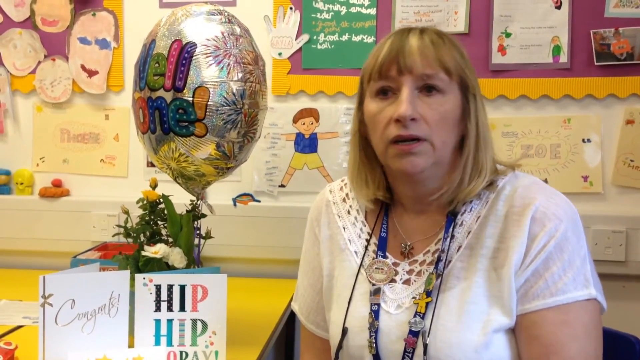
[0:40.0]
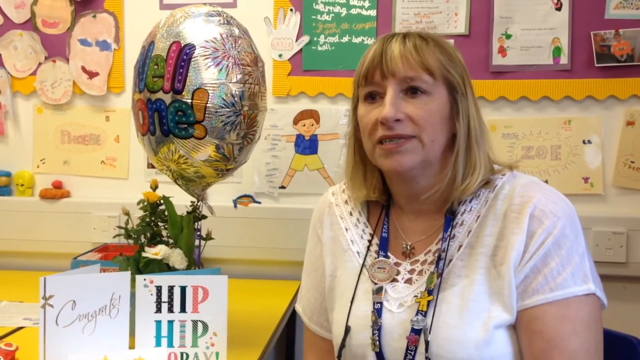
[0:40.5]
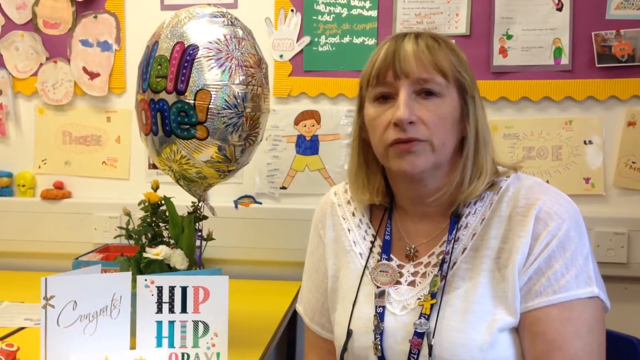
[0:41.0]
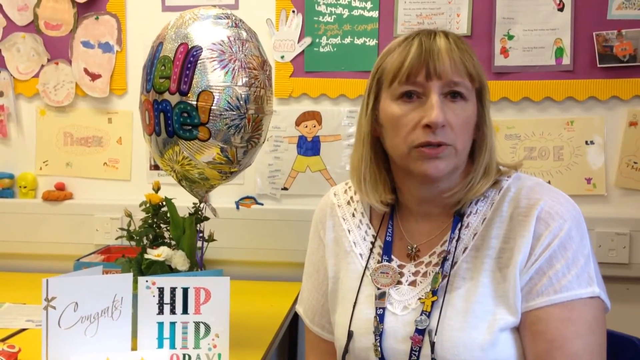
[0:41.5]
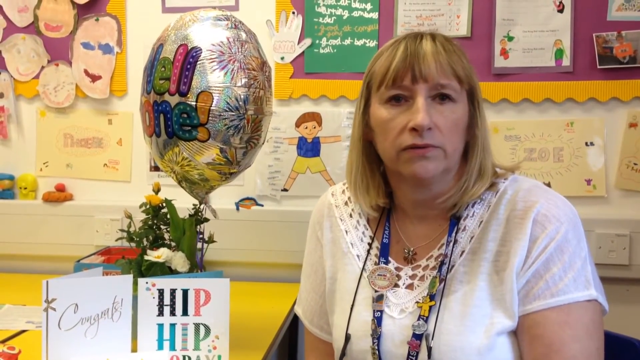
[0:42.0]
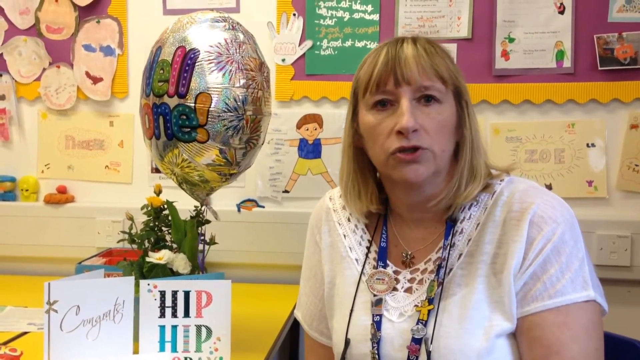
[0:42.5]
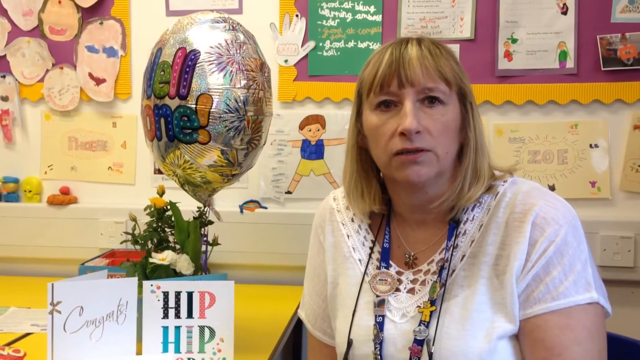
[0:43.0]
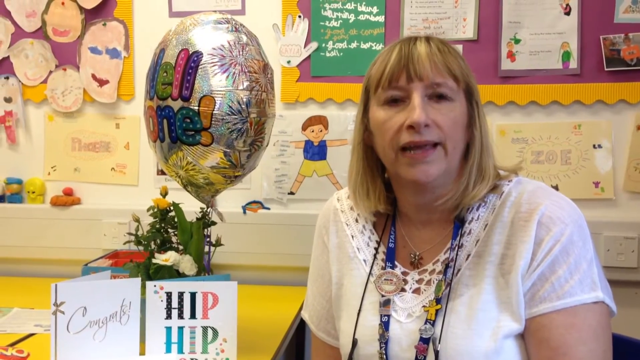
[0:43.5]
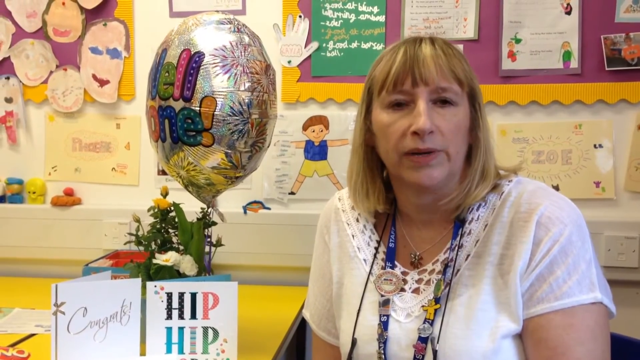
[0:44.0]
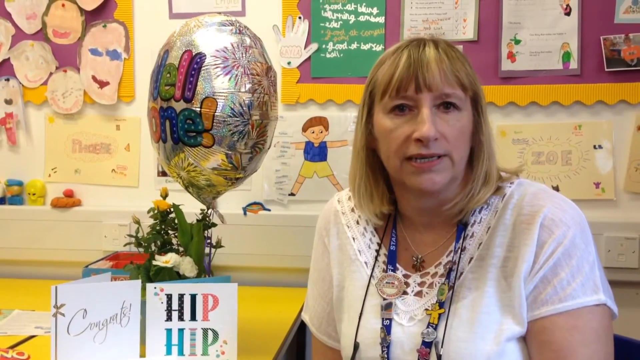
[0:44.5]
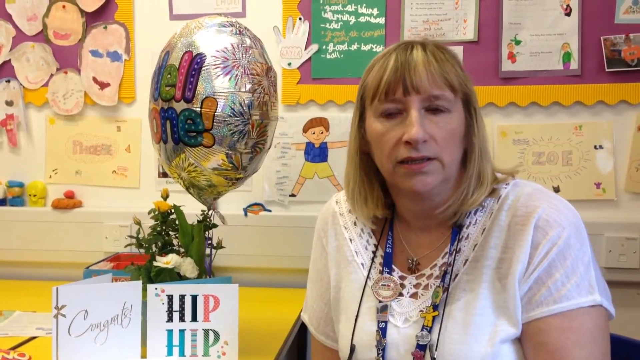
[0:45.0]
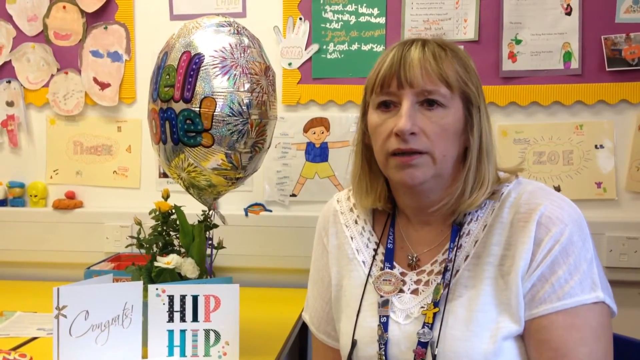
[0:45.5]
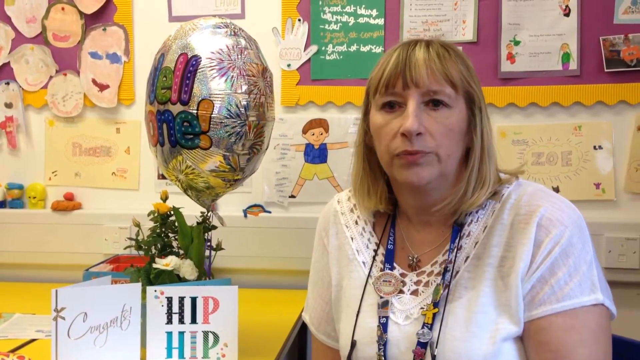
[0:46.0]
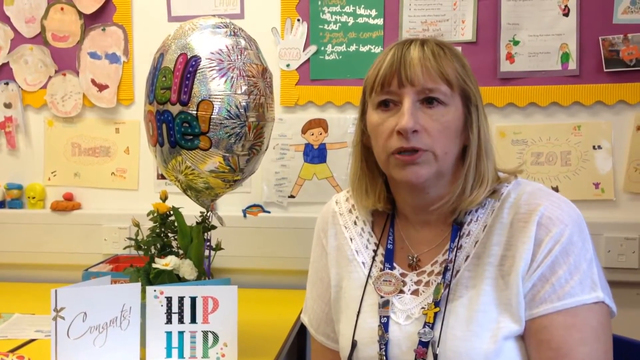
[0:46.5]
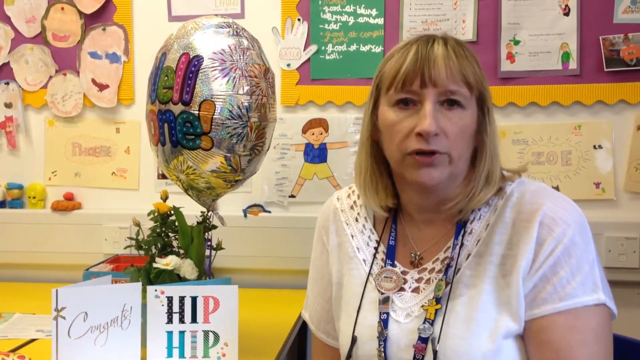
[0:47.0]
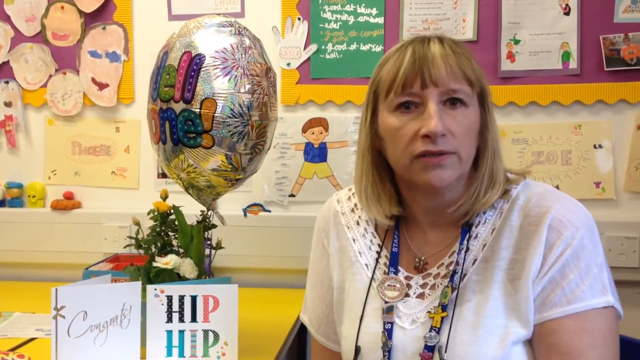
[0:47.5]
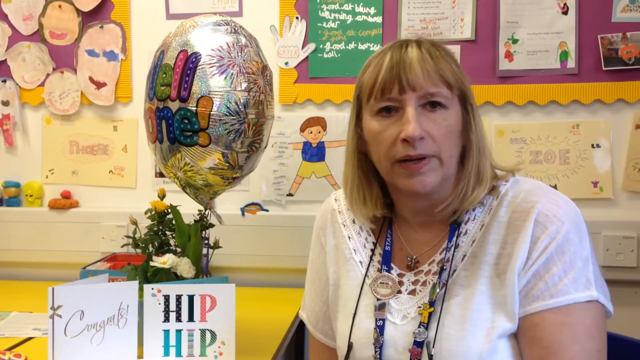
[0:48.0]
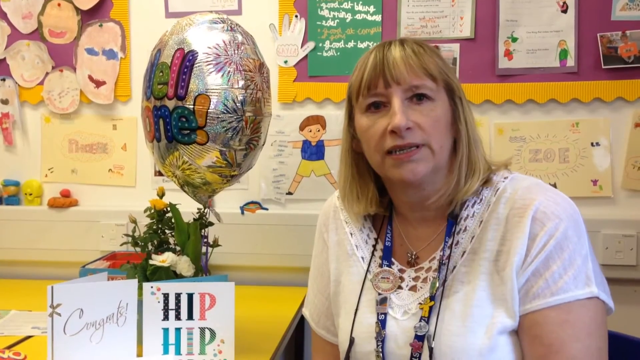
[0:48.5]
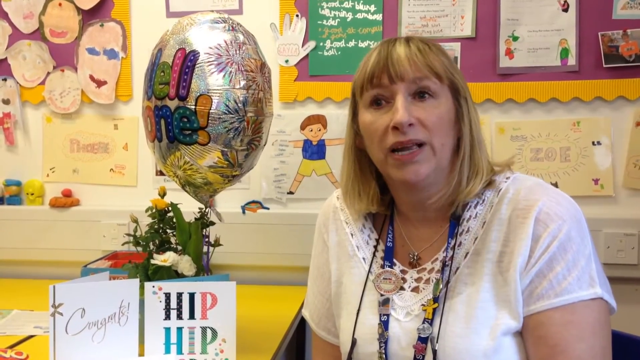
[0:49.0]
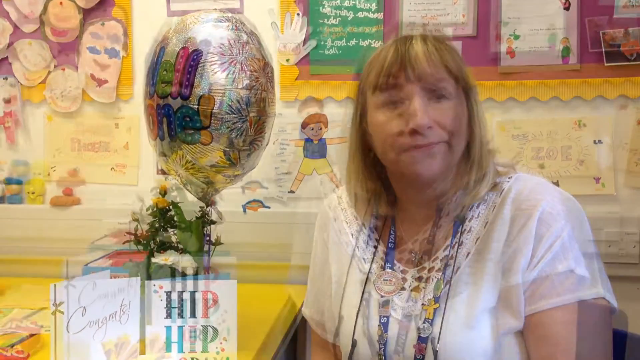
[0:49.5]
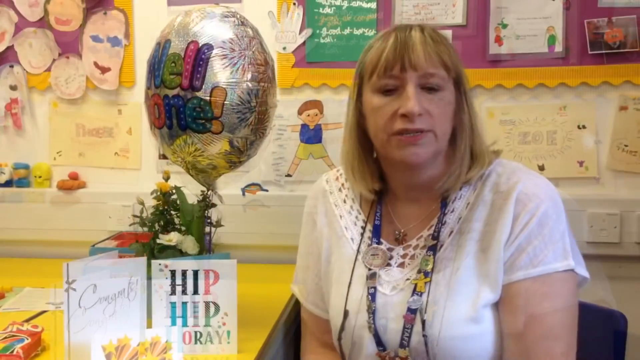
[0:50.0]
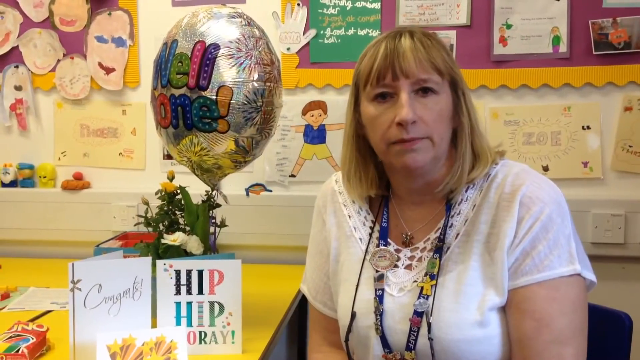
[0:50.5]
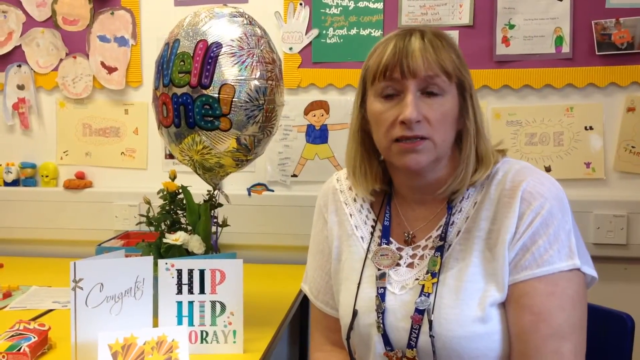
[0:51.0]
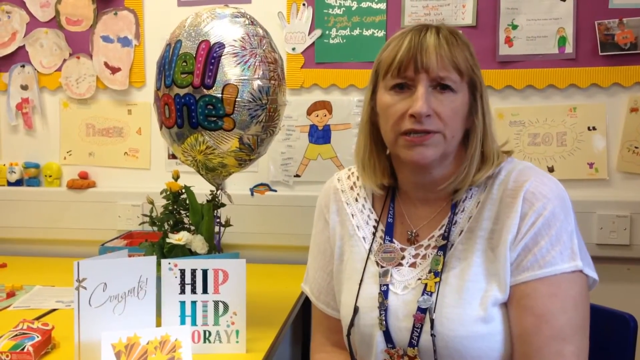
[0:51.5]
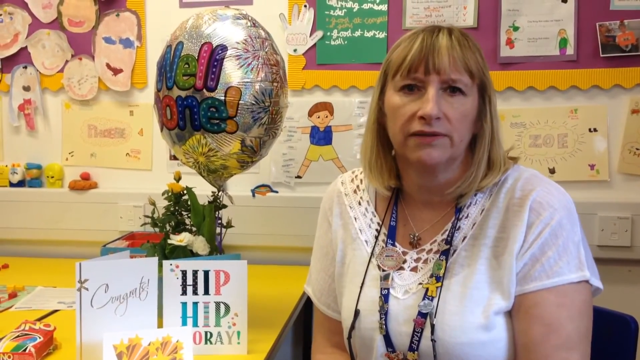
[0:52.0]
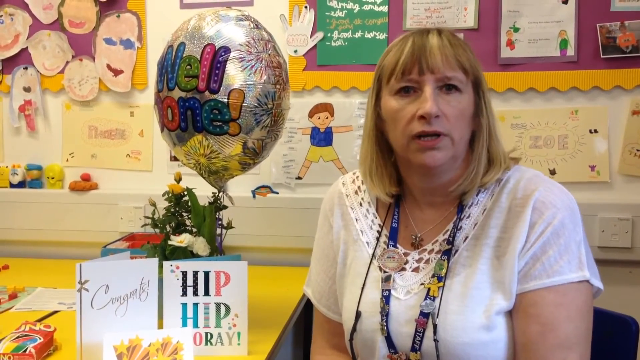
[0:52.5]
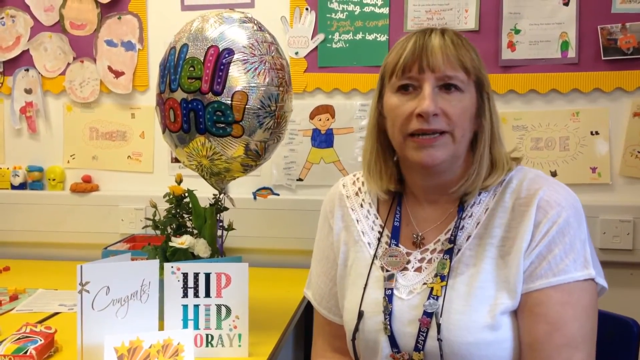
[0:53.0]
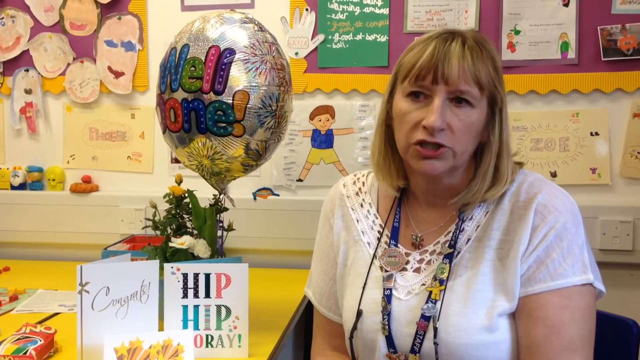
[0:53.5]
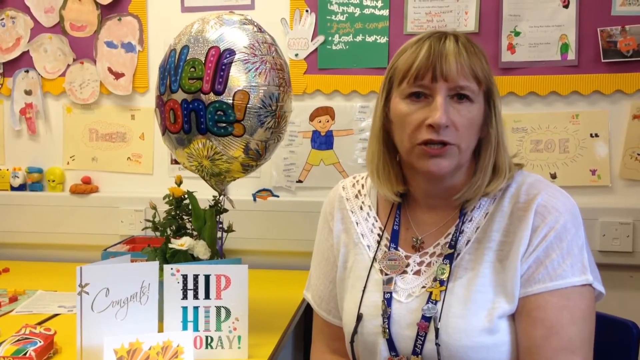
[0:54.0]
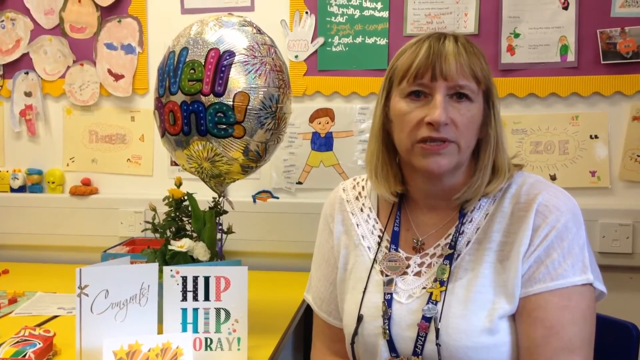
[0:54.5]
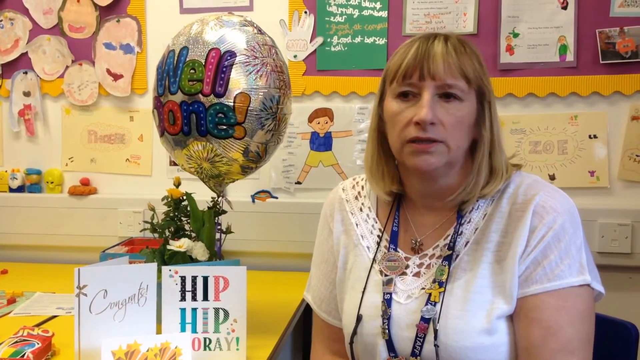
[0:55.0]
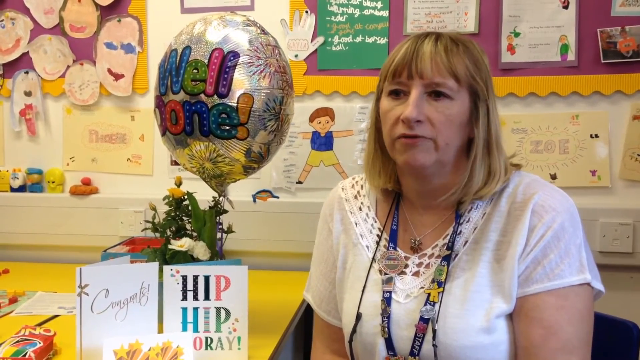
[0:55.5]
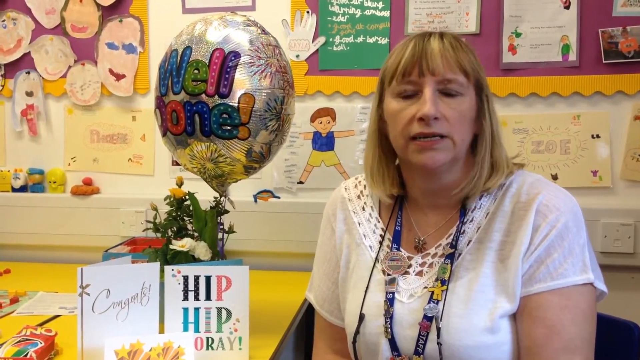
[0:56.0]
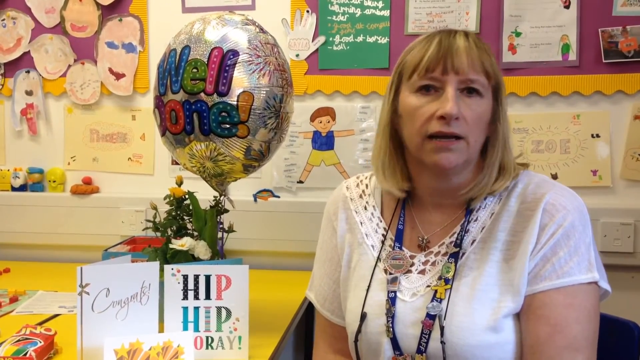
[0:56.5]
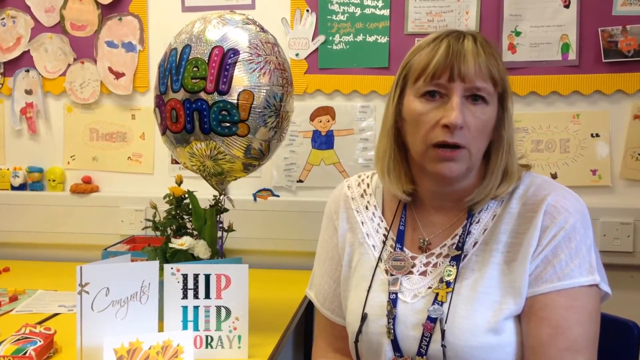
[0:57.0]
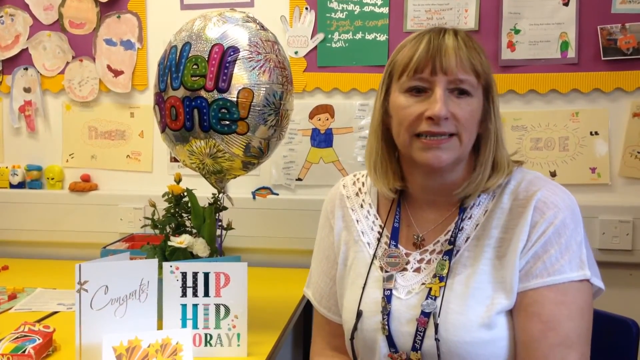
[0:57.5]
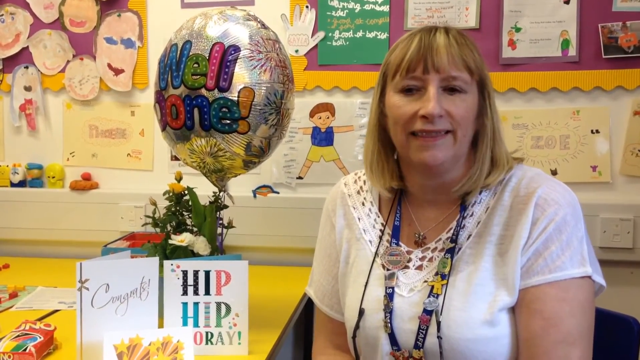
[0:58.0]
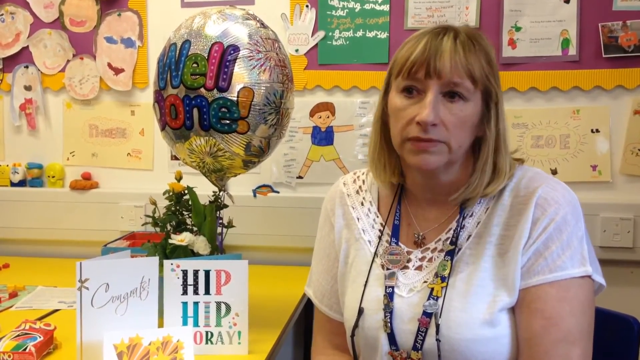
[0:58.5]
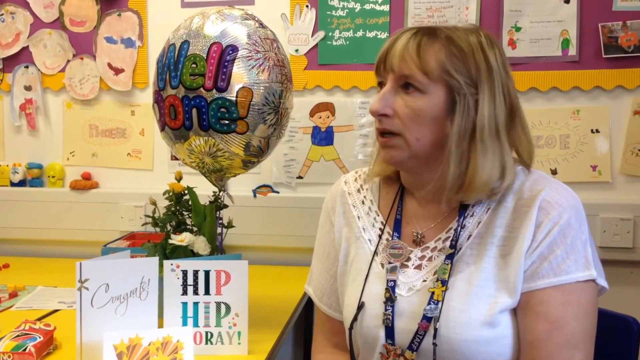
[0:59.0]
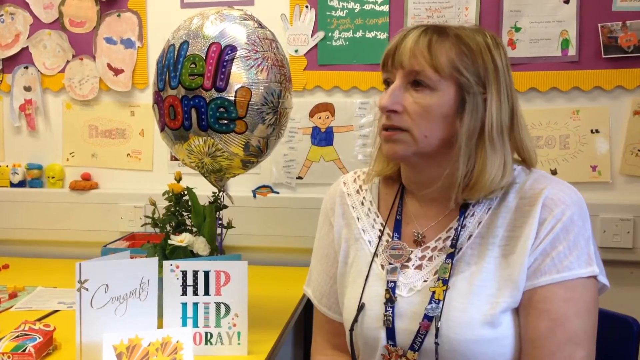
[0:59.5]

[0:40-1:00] The principal remains in focus, looking forward but a little to the left as she talks, then looking back to the camera and shrugging her shoulders slightly. Her movement is quite limited. She smiles now and then, looks directly at the camera, glances left and back as she keeps talking, and raises her eyebrows. After a slight cut she is back, talking normally, glancing a little to the left. She then looks directly left, raises her eyebrows and turns back to the camera. On the top left of the back wall is a little yellow border that comes in about two inches from the left, goes down two inches and goes back off the screen. On it are what look like two half heads the kids cut out of paper, and three full ones. Below that is a little yellow piece of paper that says "Maggie". A couple of small items are on a white ledge, and the wall behind is white. Just to one side of her head is another purple background with a yellow border, with a cut-out hand on it, and two or three cards and a picture stuck to it. Below that are more pieces of paper the kids have drawn on or written names on. Down to the right is a little square box on the border below, maybe a phone jack.